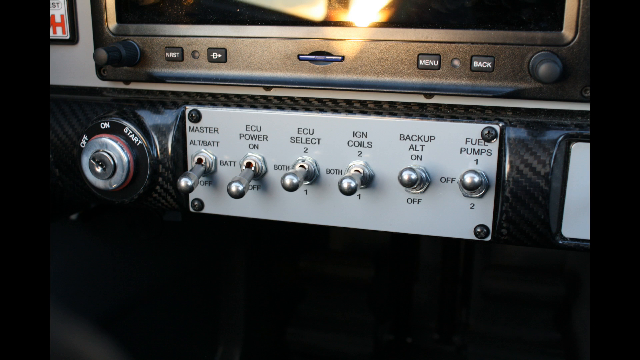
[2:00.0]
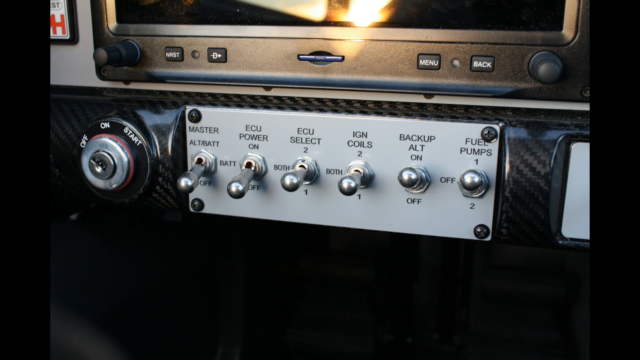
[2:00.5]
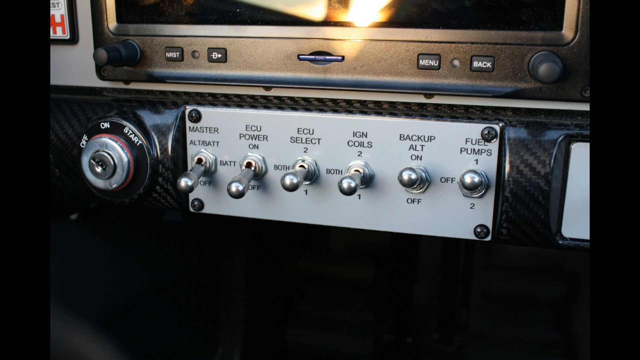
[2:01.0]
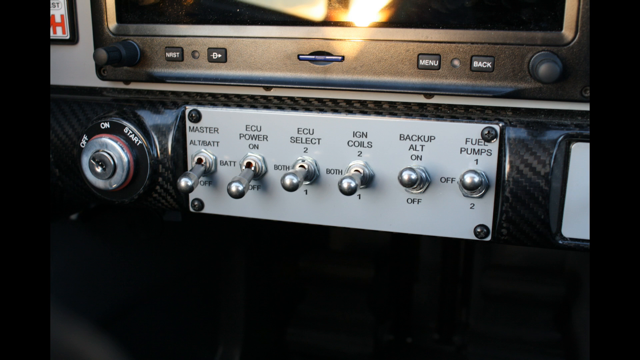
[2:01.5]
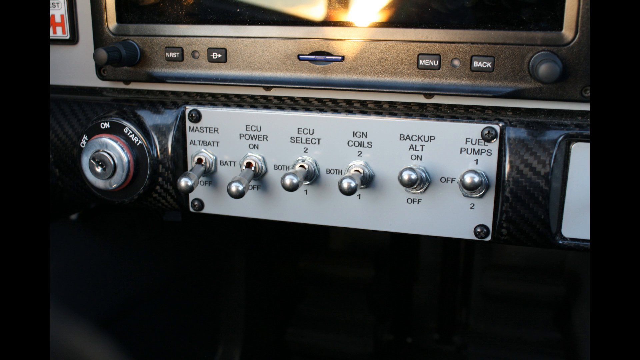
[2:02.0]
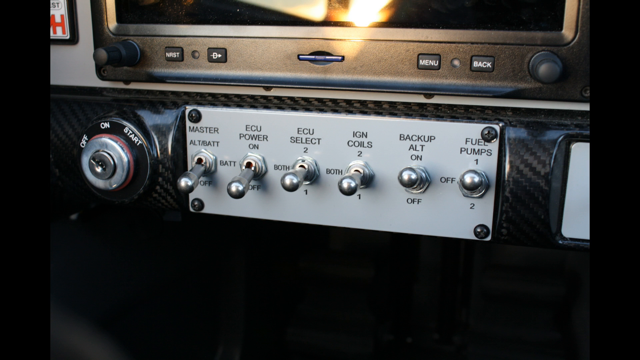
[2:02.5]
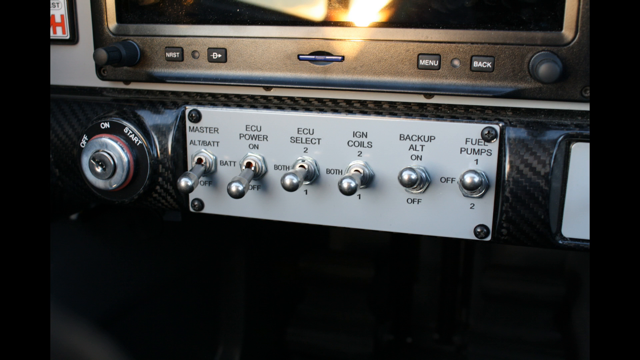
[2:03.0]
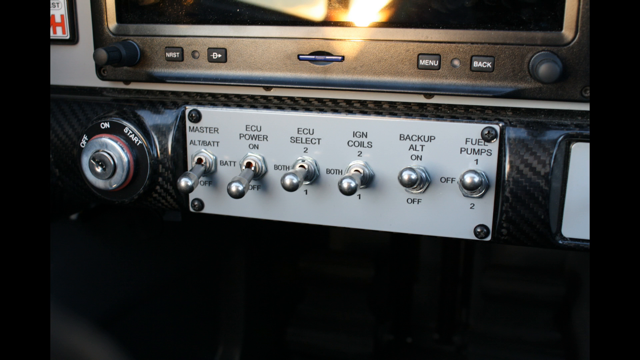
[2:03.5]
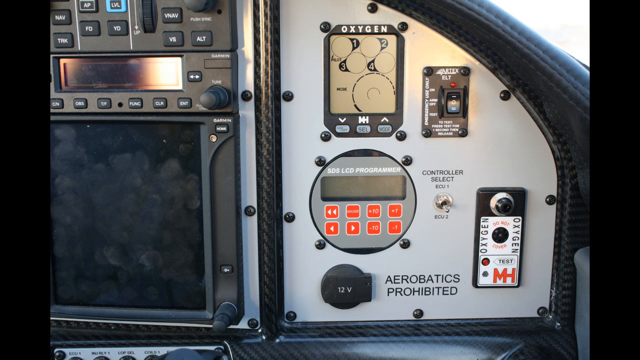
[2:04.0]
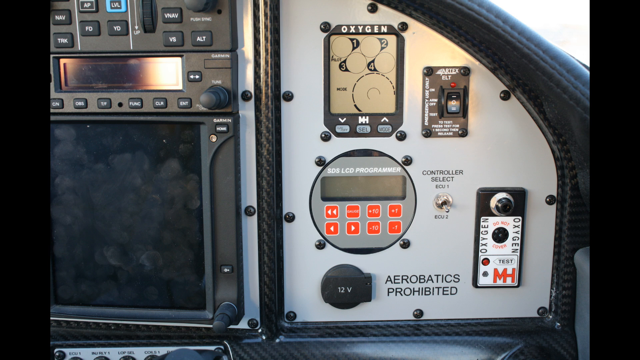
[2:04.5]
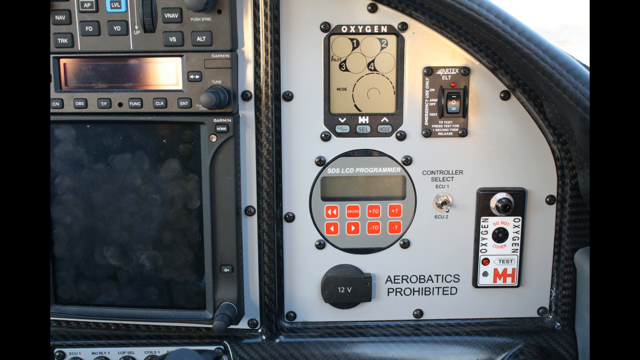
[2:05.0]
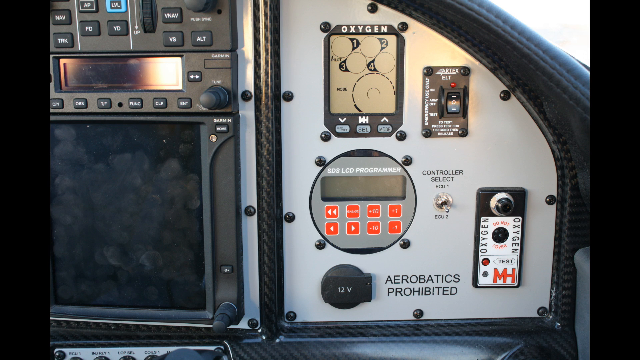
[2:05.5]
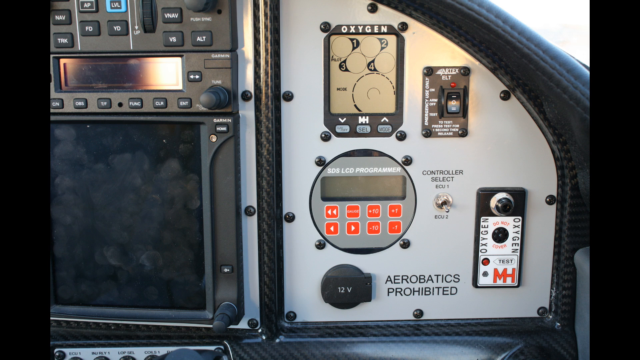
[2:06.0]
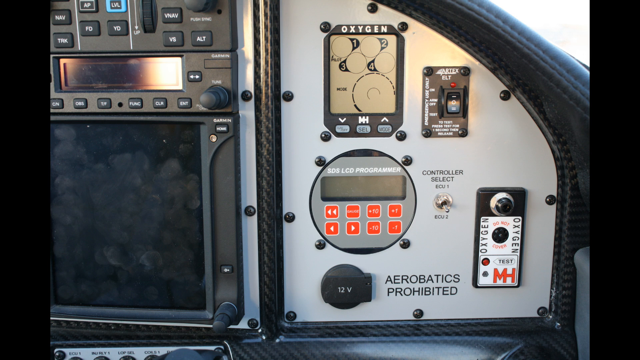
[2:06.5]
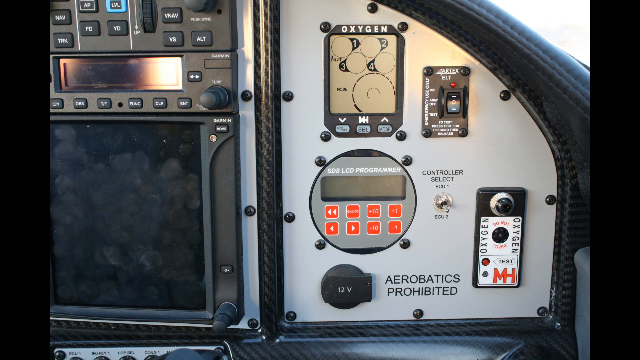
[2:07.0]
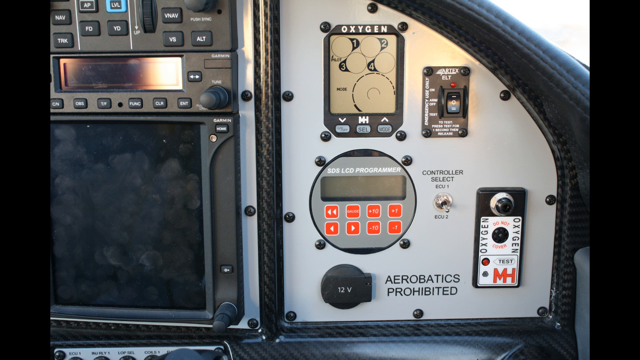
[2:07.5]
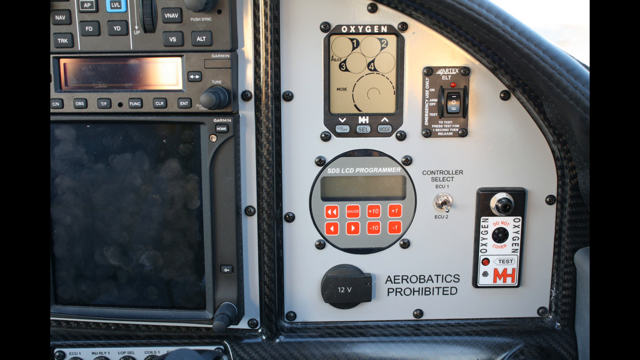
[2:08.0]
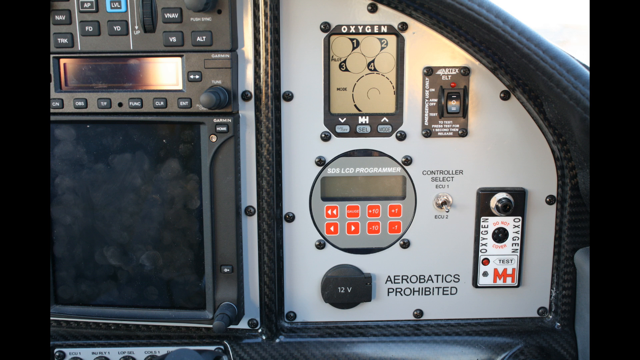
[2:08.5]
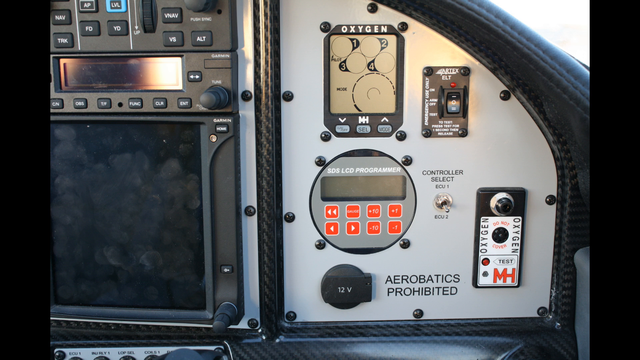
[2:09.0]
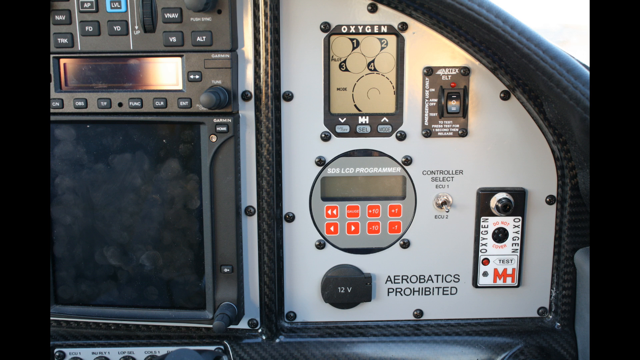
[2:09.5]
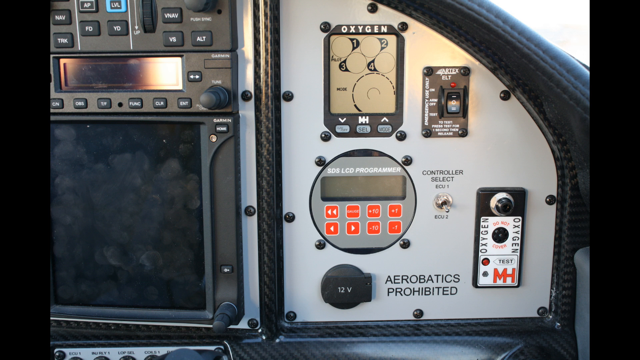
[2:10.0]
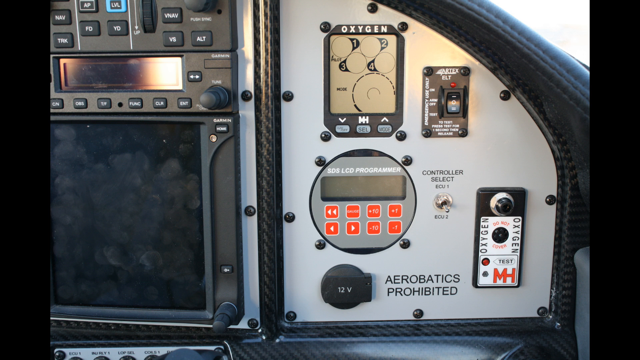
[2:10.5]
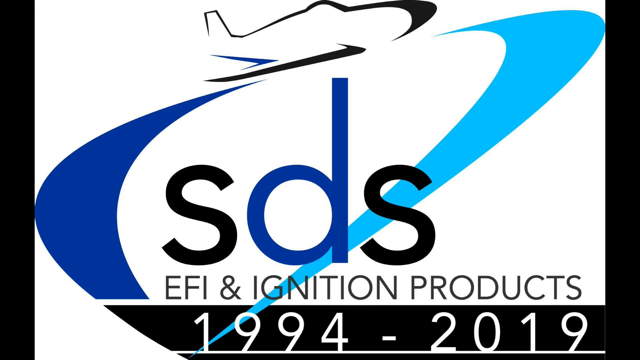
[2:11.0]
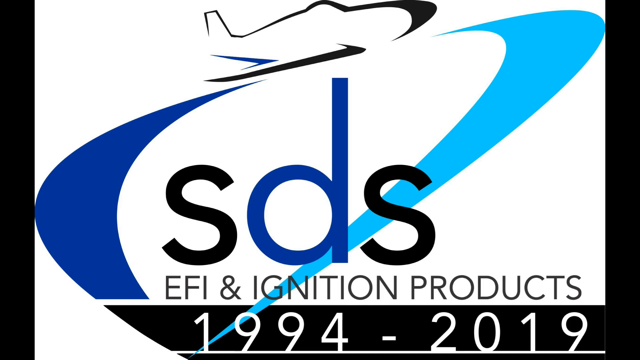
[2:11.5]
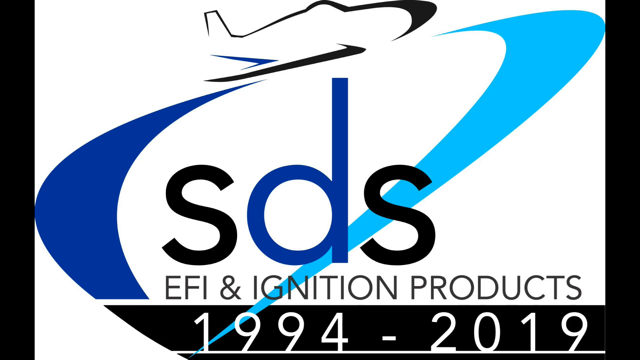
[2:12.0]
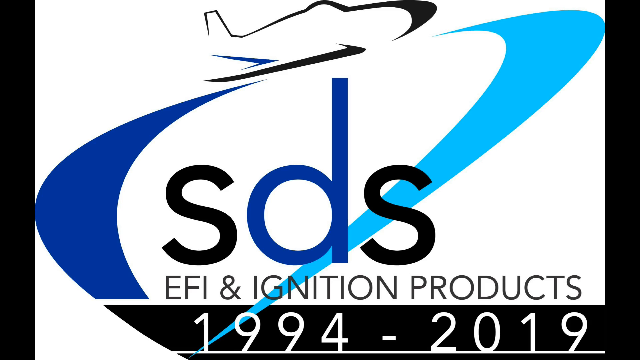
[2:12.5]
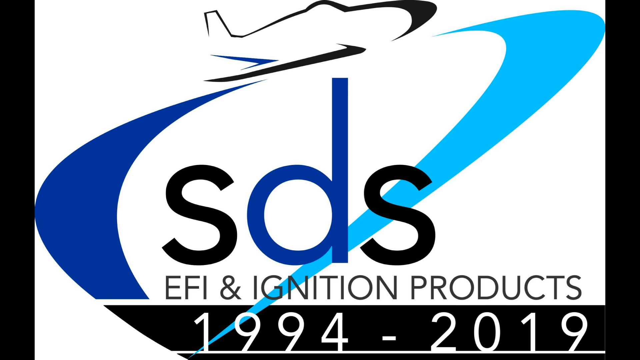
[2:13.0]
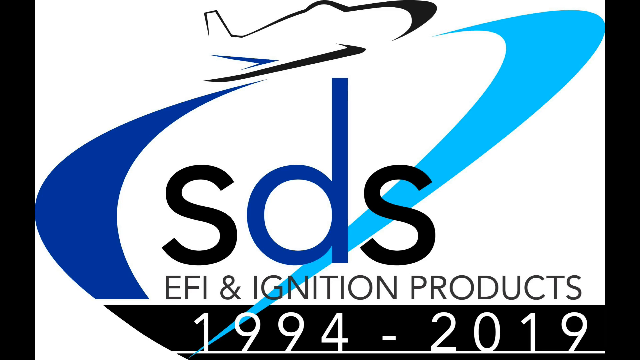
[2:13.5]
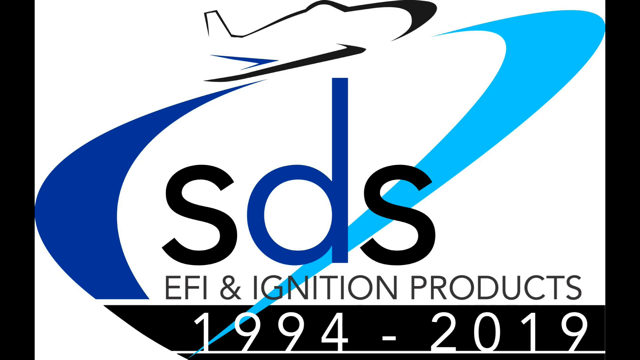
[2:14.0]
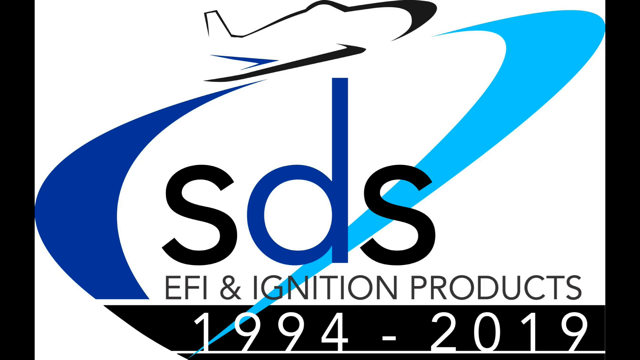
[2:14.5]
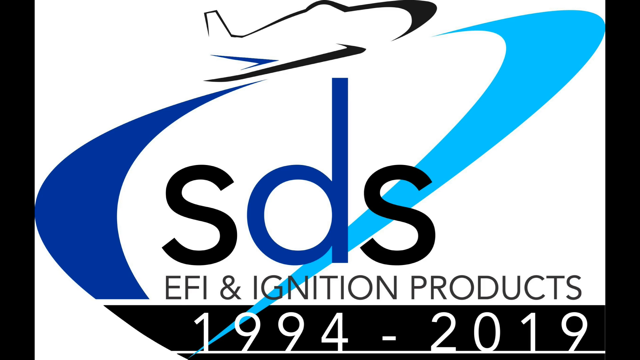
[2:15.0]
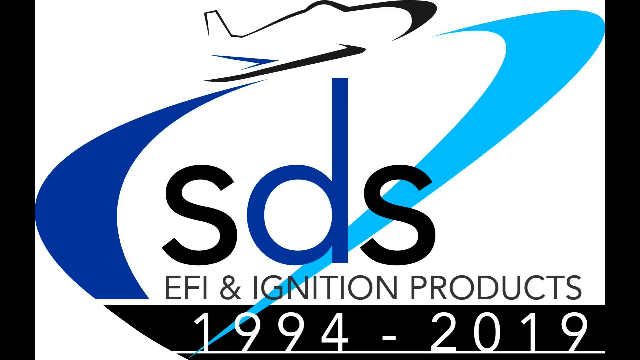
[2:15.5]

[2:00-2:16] The inside of a truck or vehicle is shown, with what looks like an ignition section for off, on, and start. Switches are labeled in black text "master," "alt," "ECU power," "ECU select," "IGN coils," "backup alt," and "fuel pumps." Small buttons at the top are labeled "menu" and "back," and there appears to be a display screen. A picture of other buttons follows, with labels such as "Alt," "Vs," "TRK," "Nav," and "Function," along with sections called "Oxygen," "SDS-LCD Programmer," "Controller Select," and "Aerobatics Prohibited," and another section that says "12 Volts." Then a white background with blue, light blue and dark blue color appears, with what looks like a drawn airplane and black and blue text that says "SDS, EFI, and ignition products 1994 to 2019."